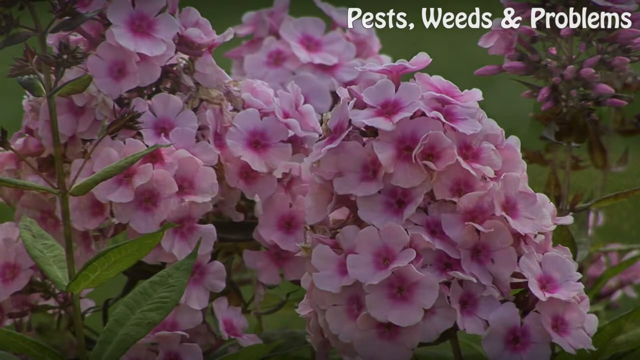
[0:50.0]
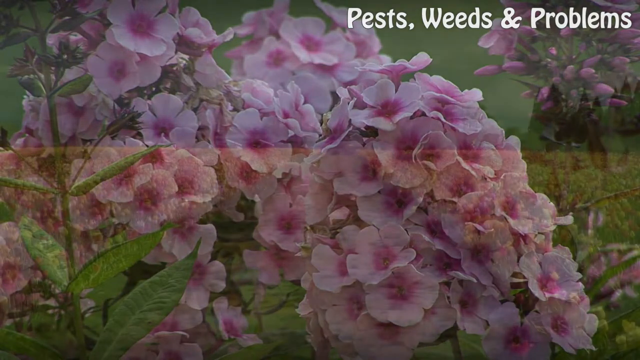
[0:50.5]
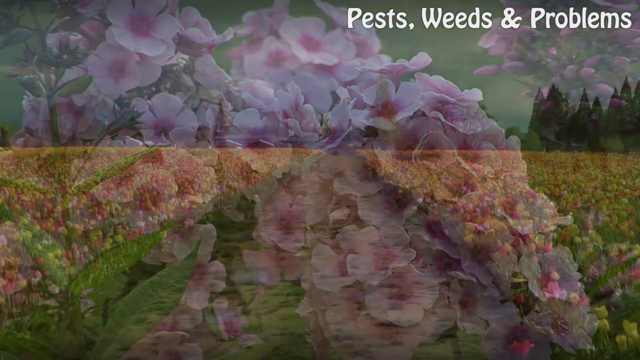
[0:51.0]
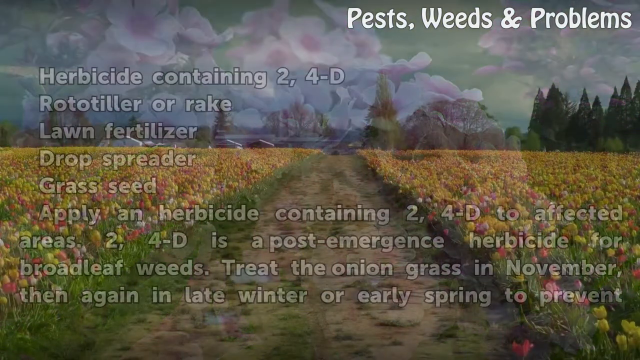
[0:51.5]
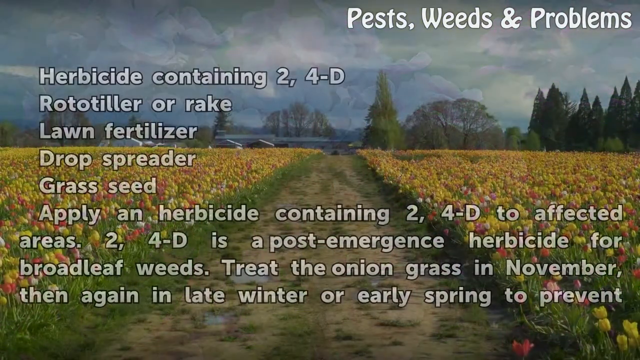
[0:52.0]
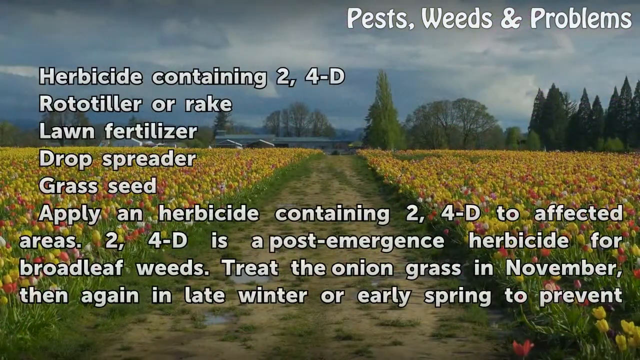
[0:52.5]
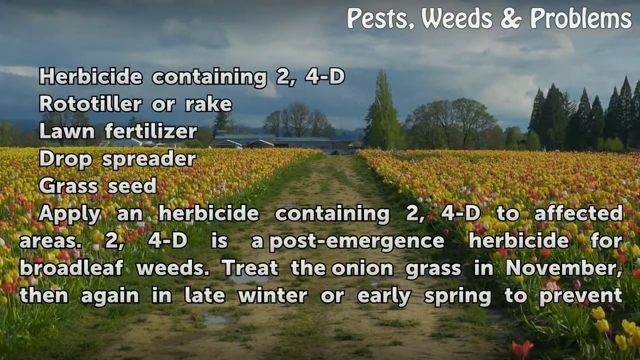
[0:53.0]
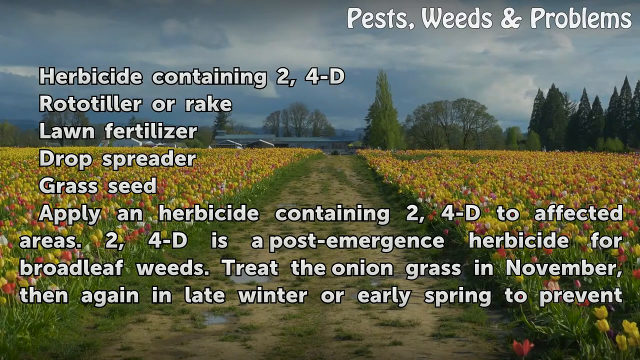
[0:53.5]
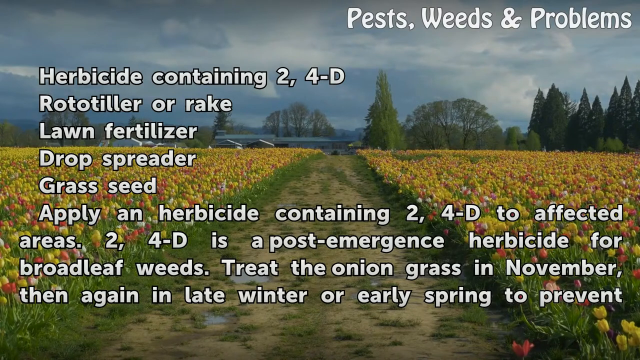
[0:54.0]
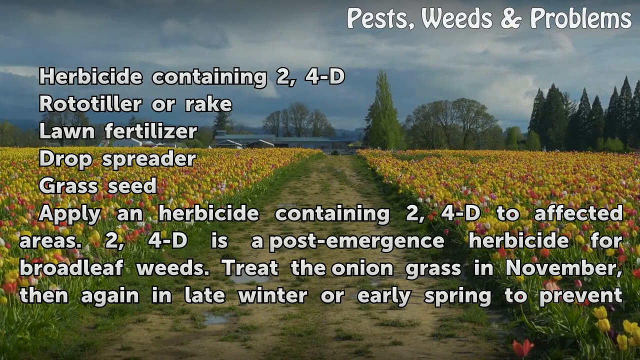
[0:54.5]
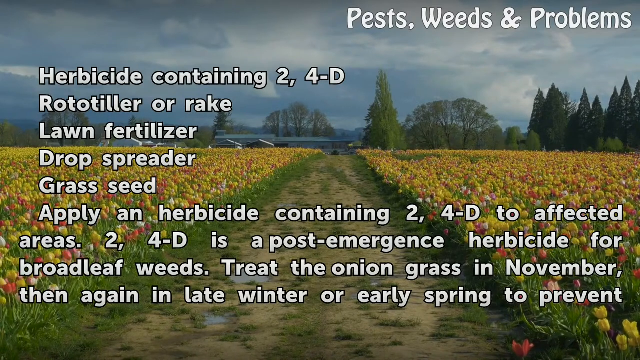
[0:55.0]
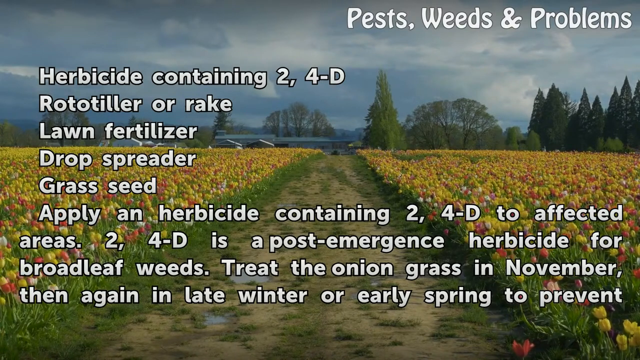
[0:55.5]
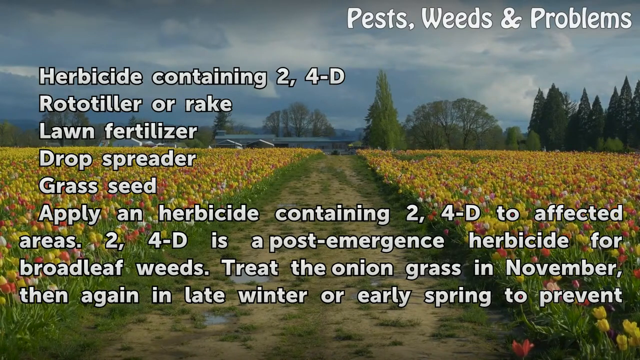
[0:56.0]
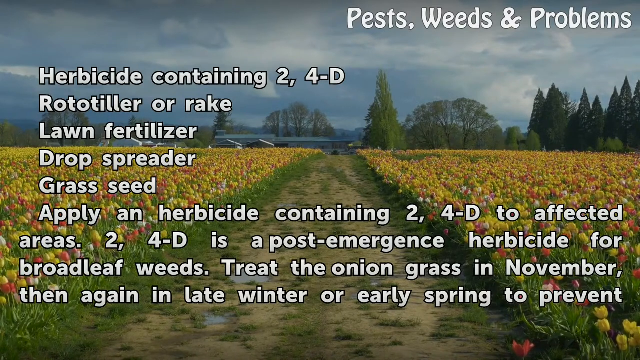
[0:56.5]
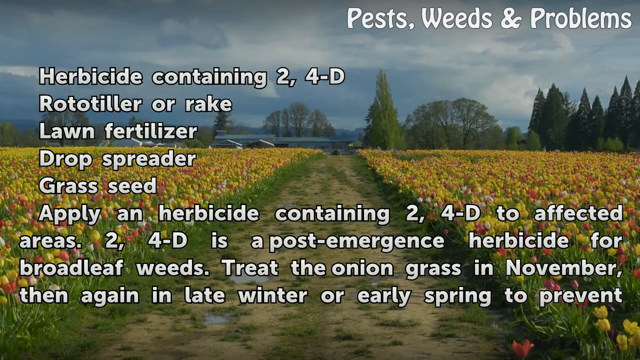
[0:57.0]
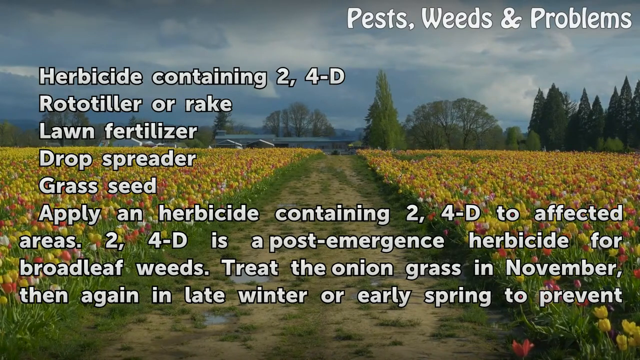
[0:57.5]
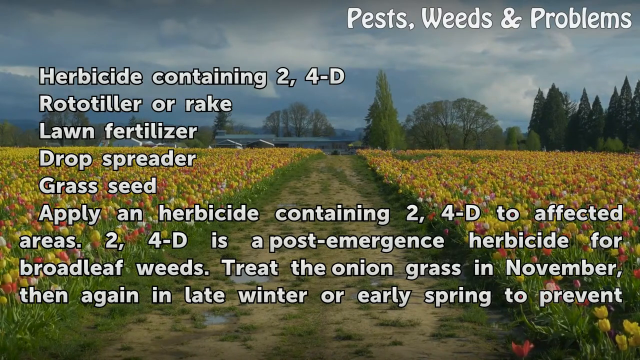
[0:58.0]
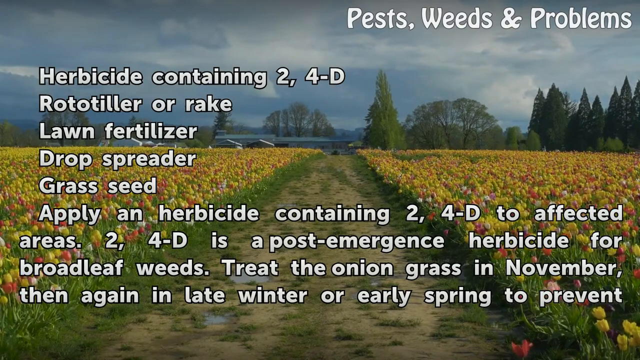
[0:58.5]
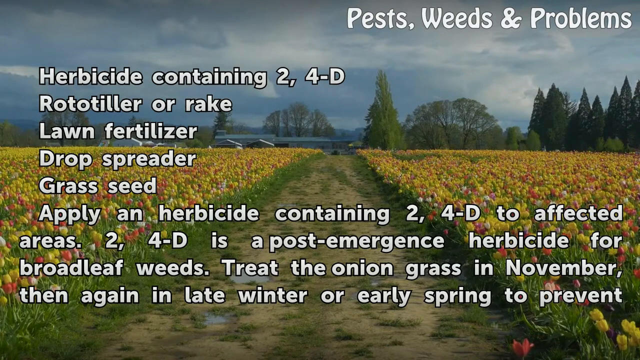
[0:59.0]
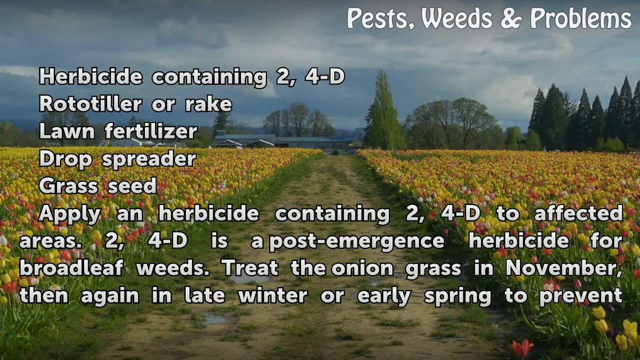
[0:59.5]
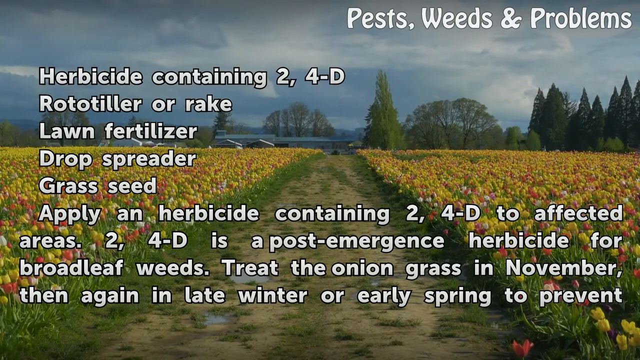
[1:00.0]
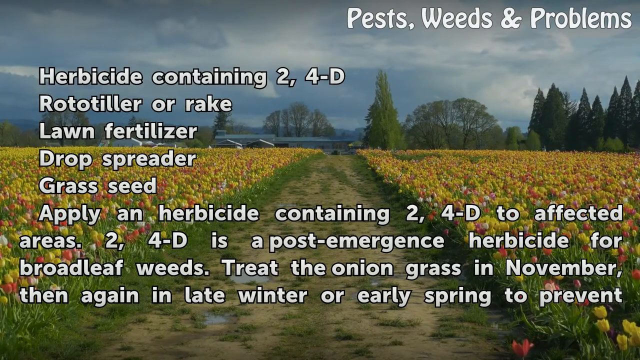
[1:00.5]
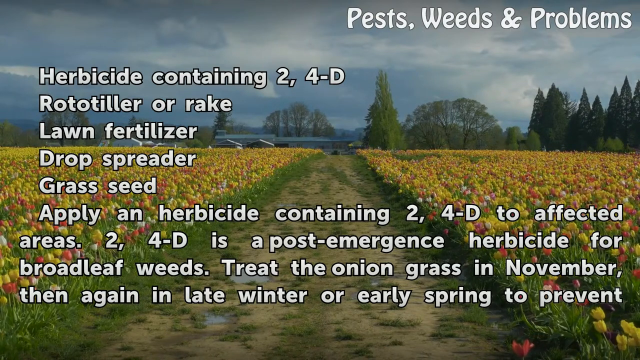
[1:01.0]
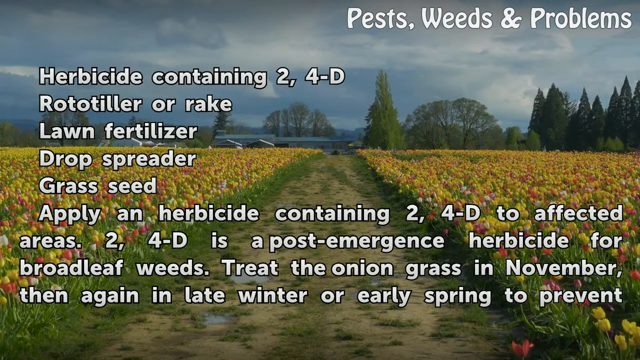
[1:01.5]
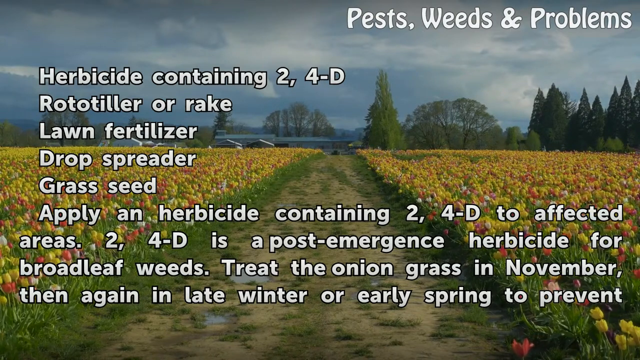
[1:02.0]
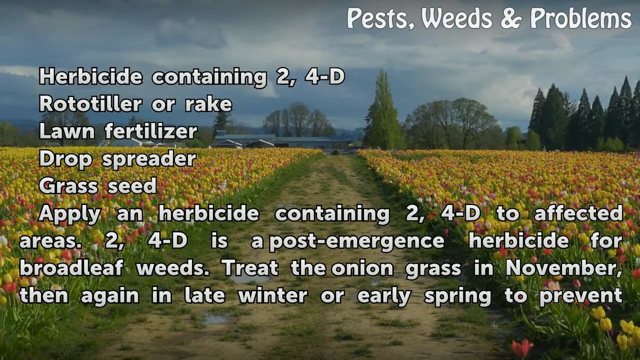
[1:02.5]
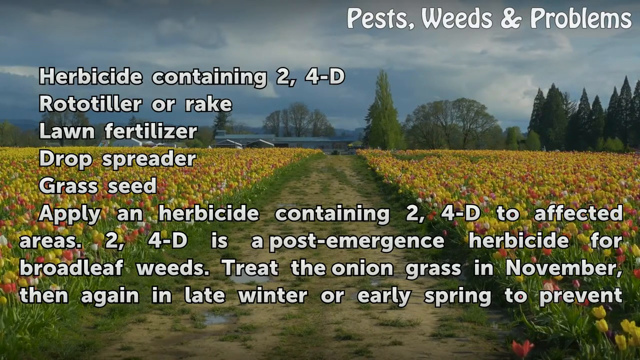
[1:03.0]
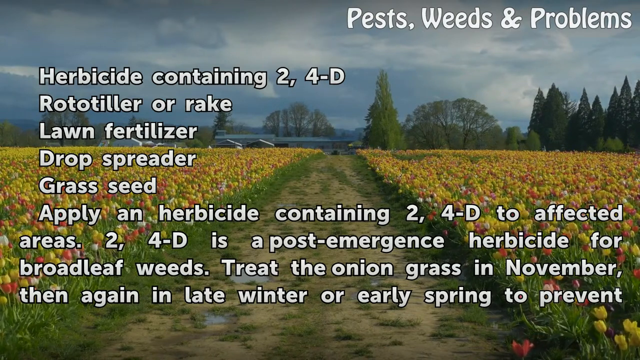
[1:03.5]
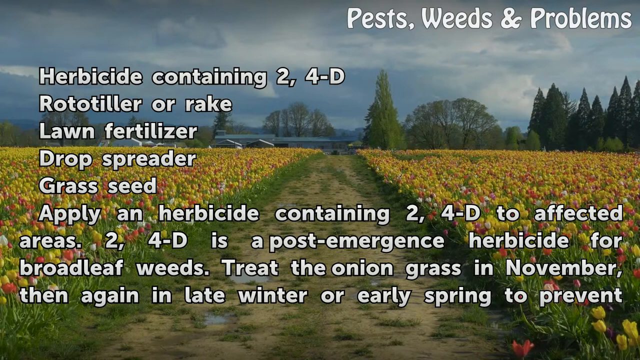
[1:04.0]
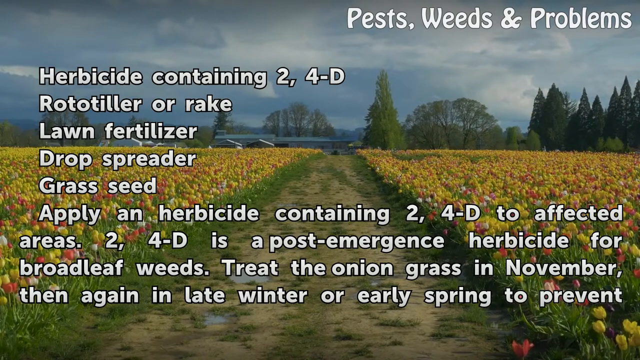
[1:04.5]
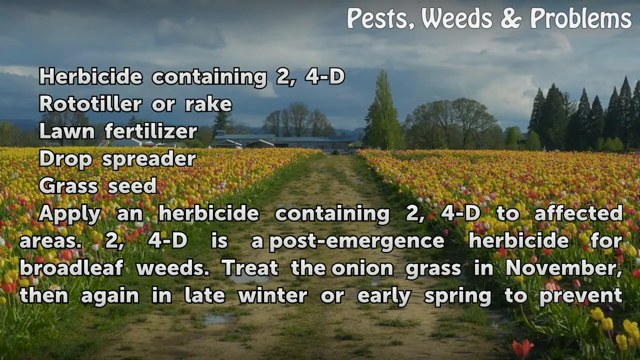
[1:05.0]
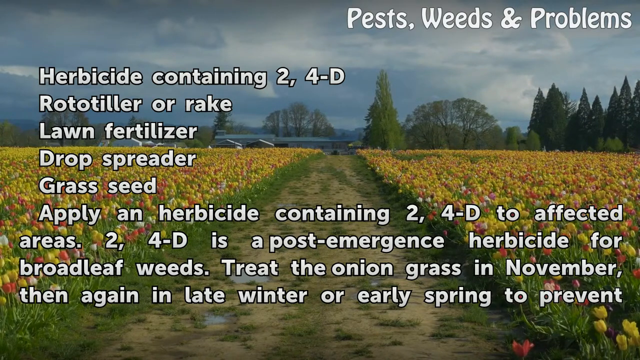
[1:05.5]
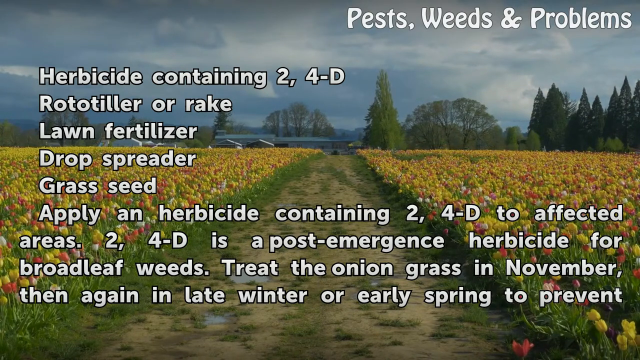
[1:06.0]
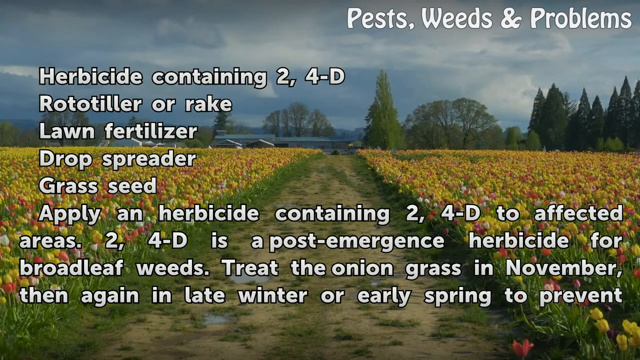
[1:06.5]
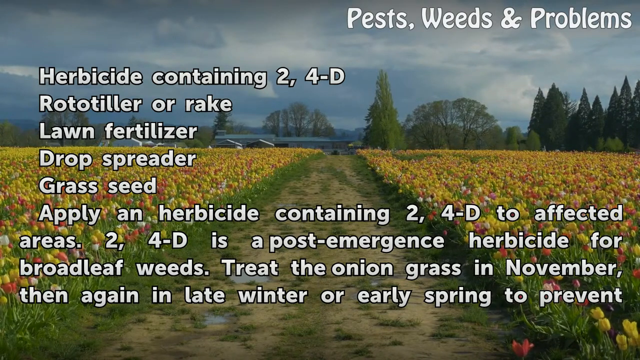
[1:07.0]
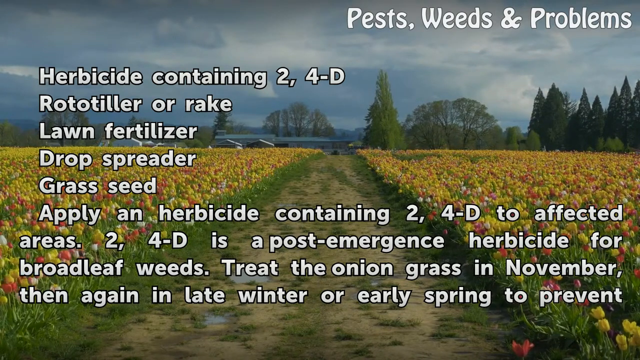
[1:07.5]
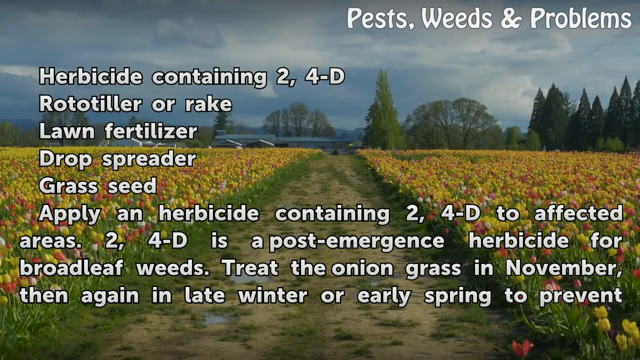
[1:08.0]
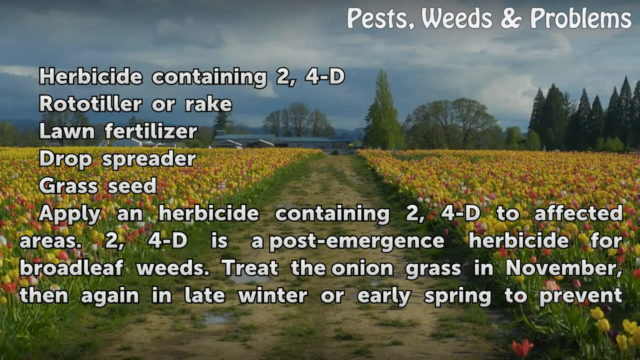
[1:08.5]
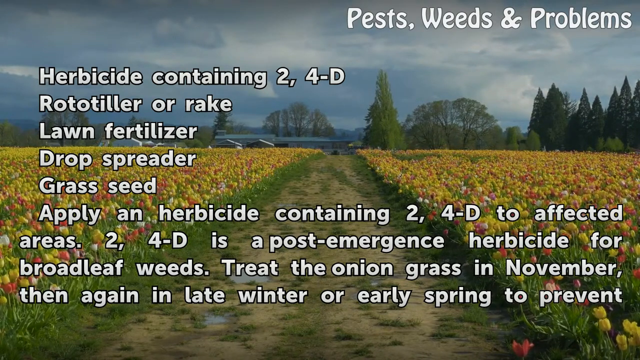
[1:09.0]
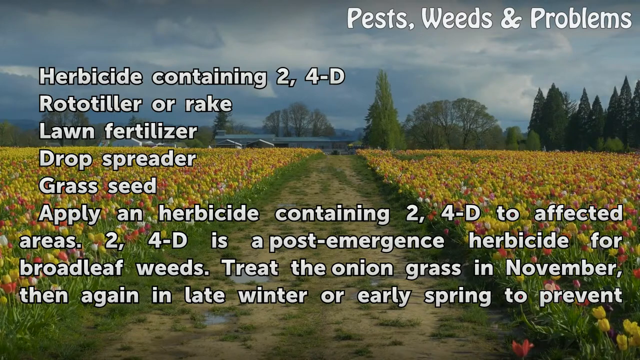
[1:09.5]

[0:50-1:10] The pink flowers of an unidentified kind are still in the background. After the "Things you'll need" text, the video transitions to a different nature picture: what seems to be a field of tulips, with a road in the middle of two fields. The tulips are of different colors, with yellow predominant. Text then appears reading "herbicide containing 2N4D, rototiller or rake, lawn fertilizer, drop spreader, grass seed." Instructions follow, reading "Apply a herbicide containing 2N4D to affected areas. 2N4D is a post-emergence herbicide for broadleaf weeds. Treat the onion grass in November, then again in late winter or early spring to prevent." The tulip field remains in the background.